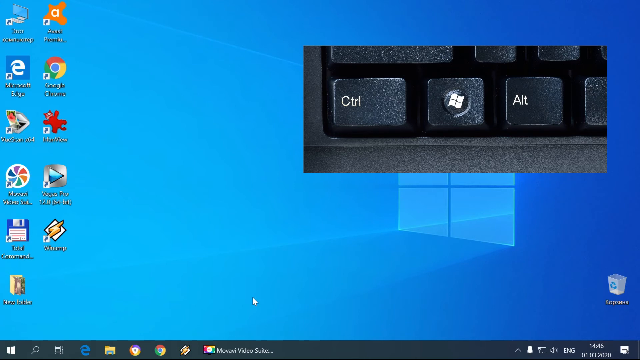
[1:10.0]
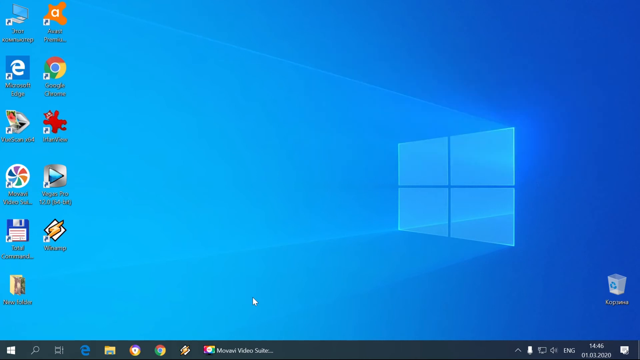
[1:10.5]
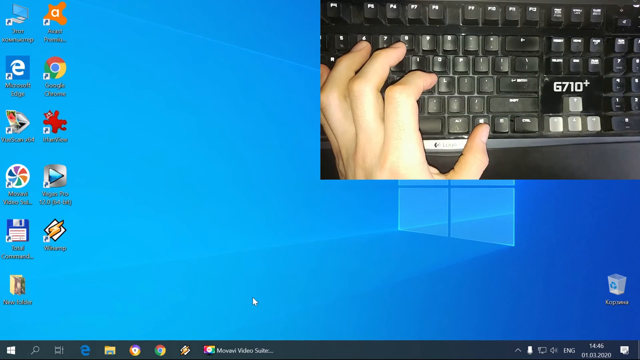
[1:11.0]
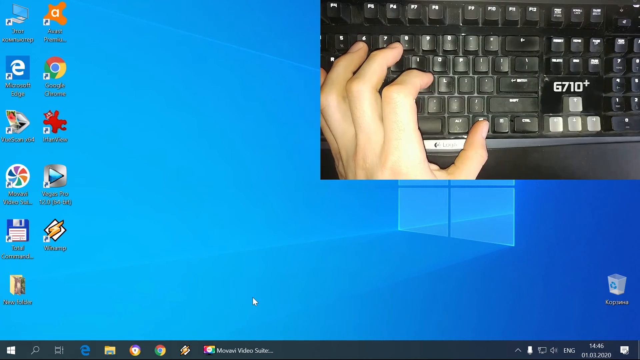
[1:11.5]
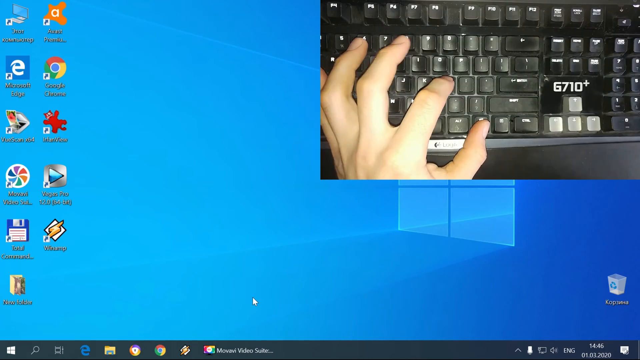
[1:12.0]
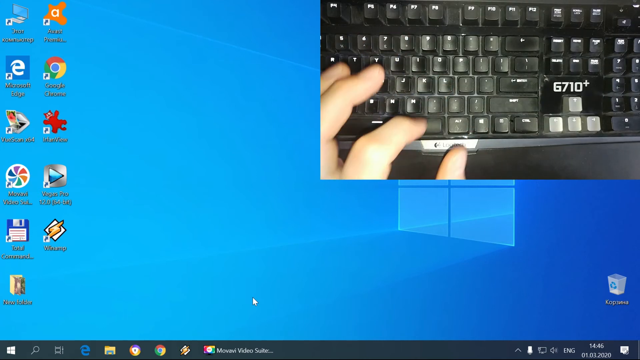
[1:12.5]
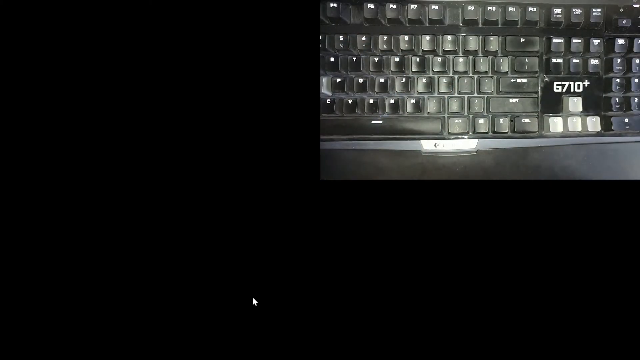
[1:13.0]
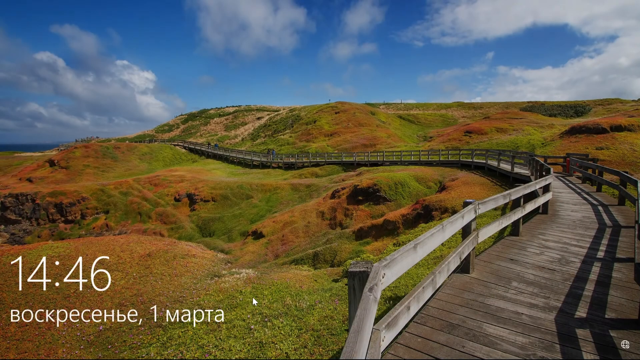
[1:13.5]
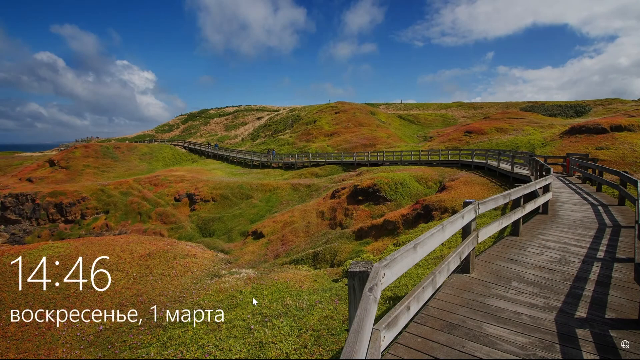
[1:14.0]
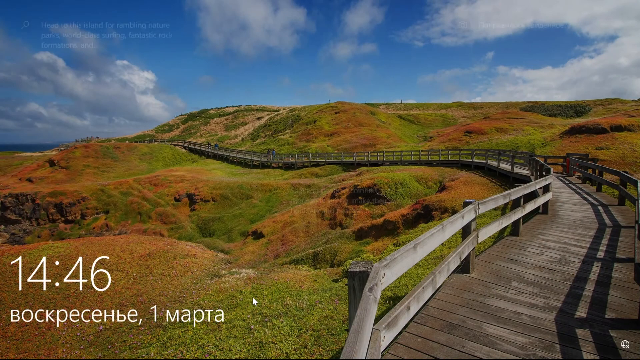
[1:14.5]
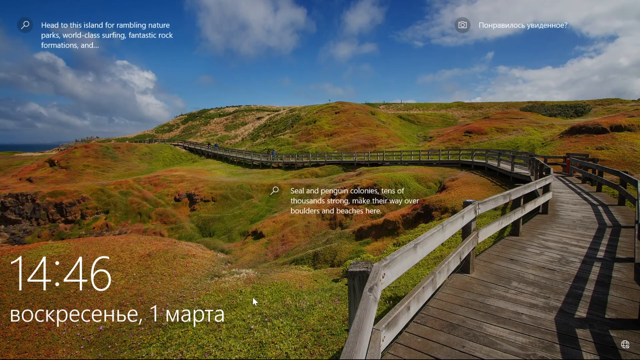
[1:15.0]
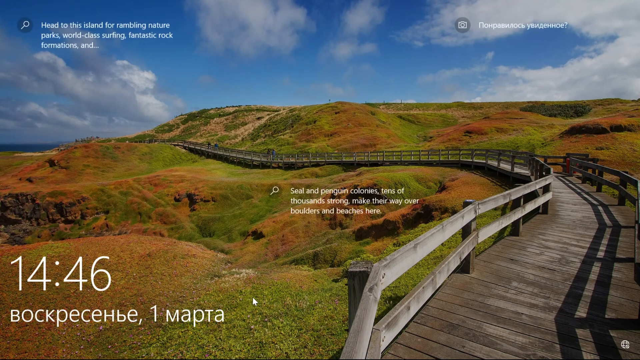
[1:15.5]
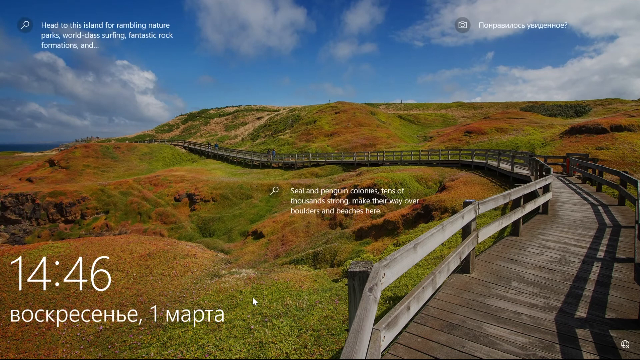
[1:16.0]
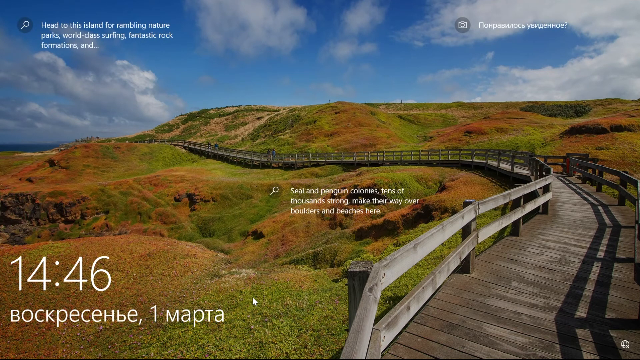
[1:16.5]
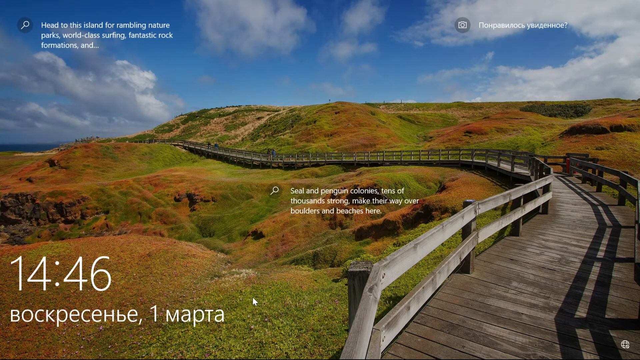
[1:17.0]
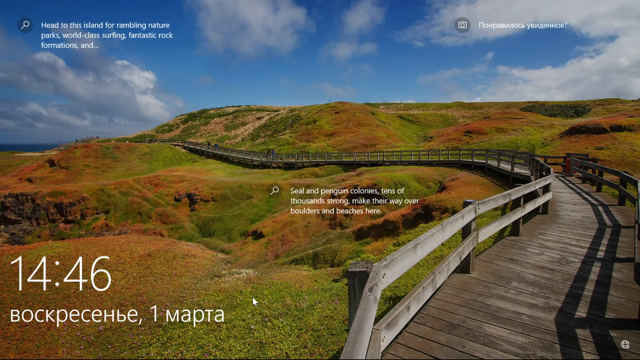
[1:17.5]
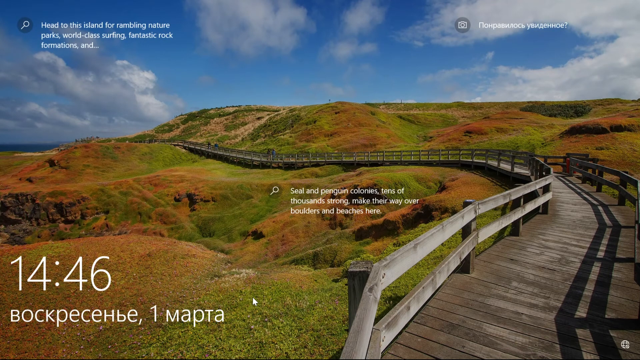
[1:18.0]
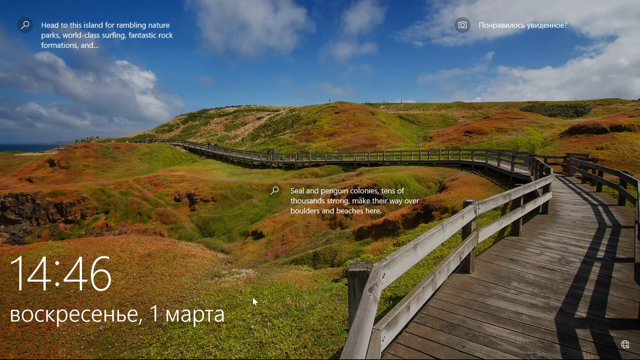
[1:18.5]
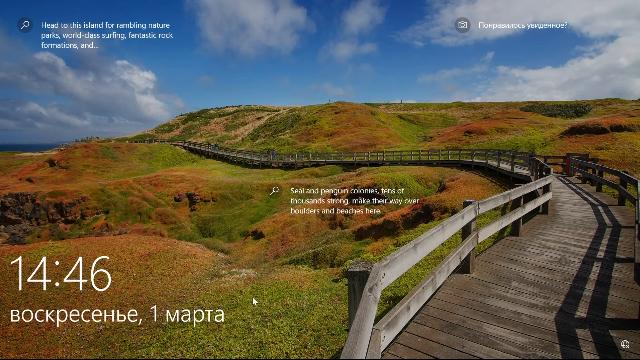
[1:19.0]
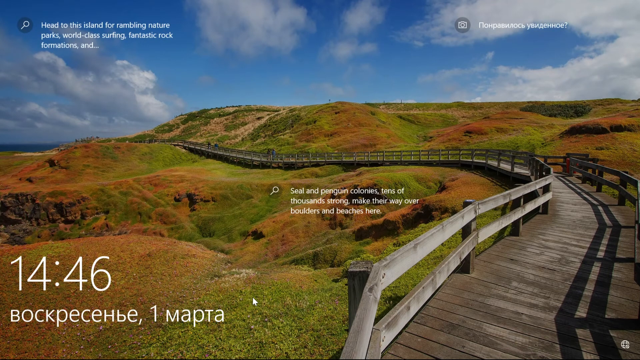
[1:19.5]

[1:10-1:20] A screen capture shows someone's Windows computer with the classic all-blue background featuring a window emanating light, and 11 apps on the left side of the screen. On the center right, near the top corner, a small insert of a Windows keyboard appears, showing a Control button, the Windows Home button, and the Alt button. It stays on screen for a brief second and disappears. A video of a person typing in a few letters follows. Next comes a home screen or lock screen featuring a wooden trail across small, low mountain ridges and valleys, with the time 14:46. Text on the screen says "Head to this island for rambling nature parks, world-class surfing, fantastic rock formations, and seal and penguin colonies. Tens of thousands strong make their way over boulders and beaches here." A country name in German is in the bottom left-hand corner.